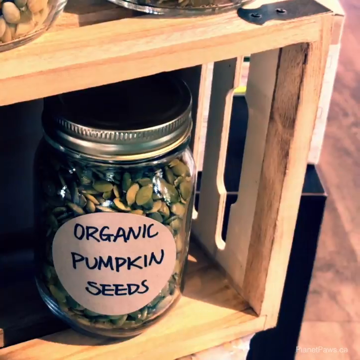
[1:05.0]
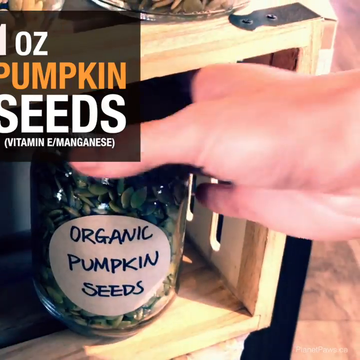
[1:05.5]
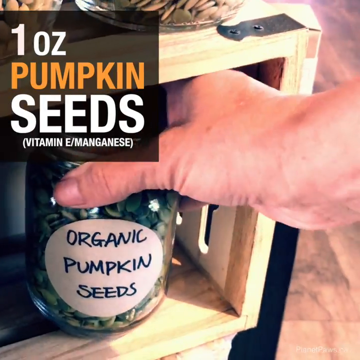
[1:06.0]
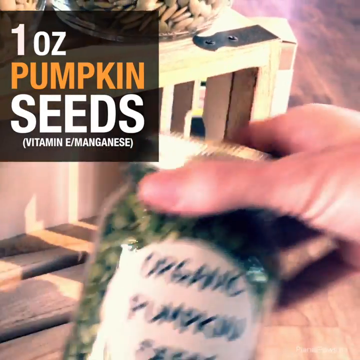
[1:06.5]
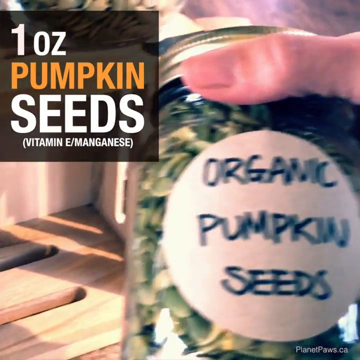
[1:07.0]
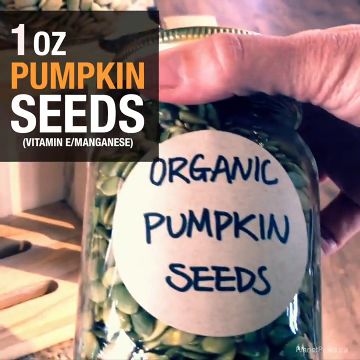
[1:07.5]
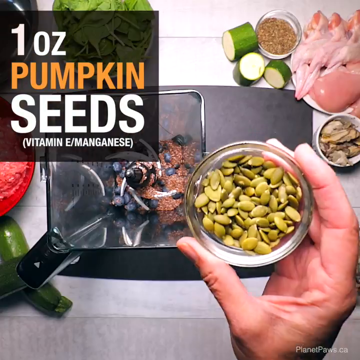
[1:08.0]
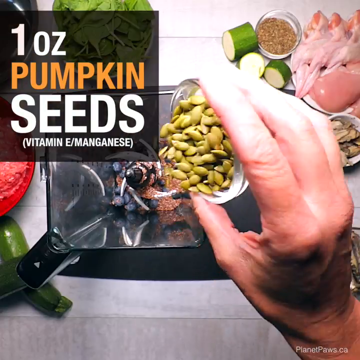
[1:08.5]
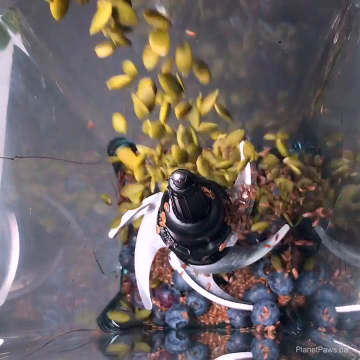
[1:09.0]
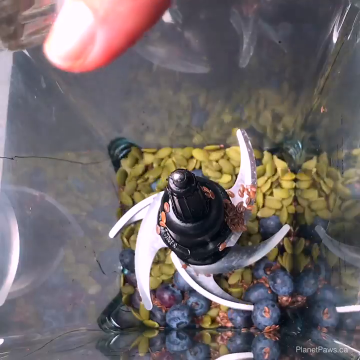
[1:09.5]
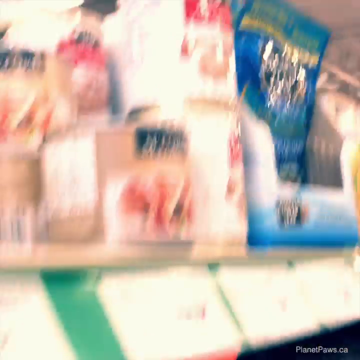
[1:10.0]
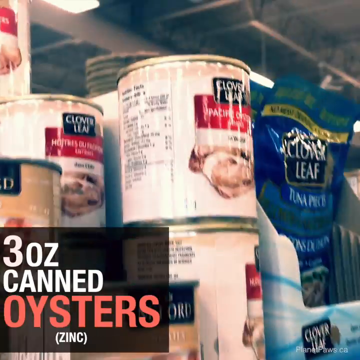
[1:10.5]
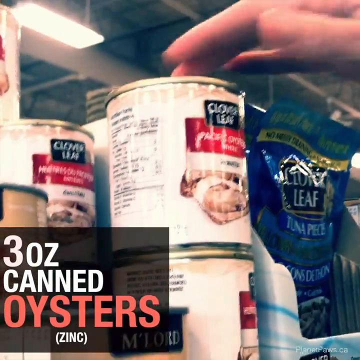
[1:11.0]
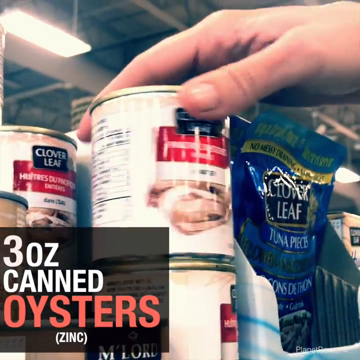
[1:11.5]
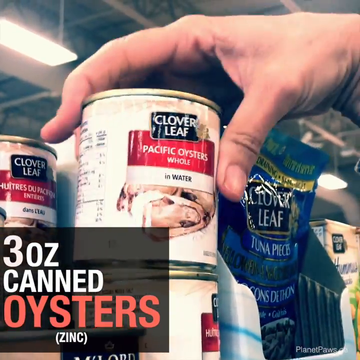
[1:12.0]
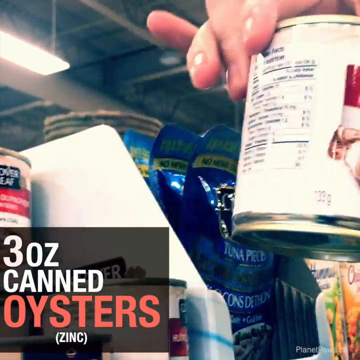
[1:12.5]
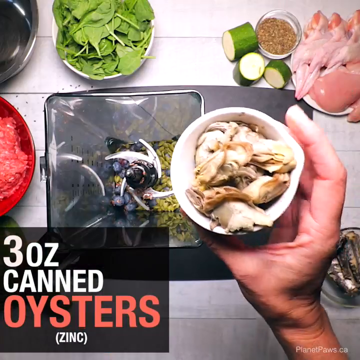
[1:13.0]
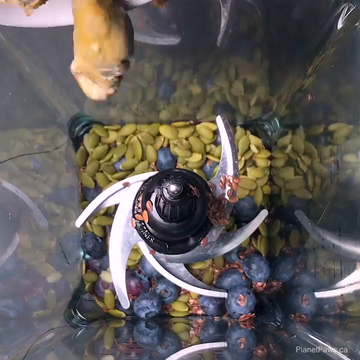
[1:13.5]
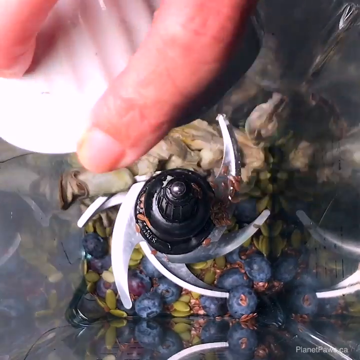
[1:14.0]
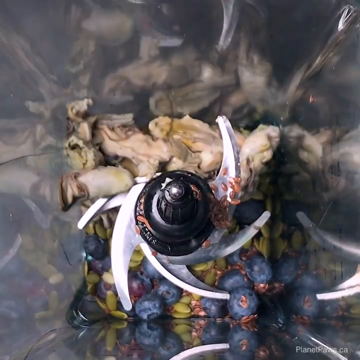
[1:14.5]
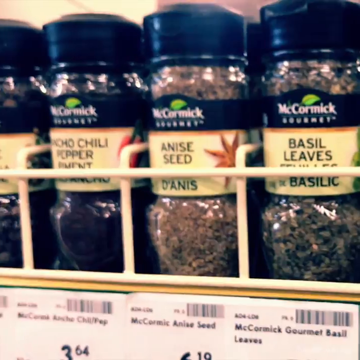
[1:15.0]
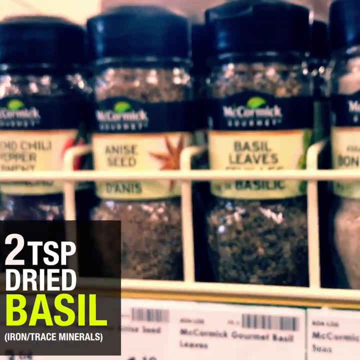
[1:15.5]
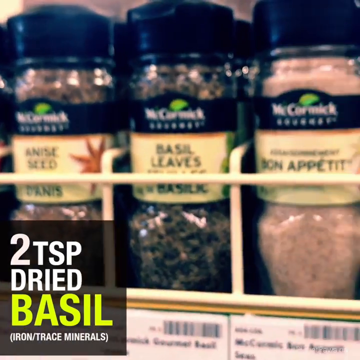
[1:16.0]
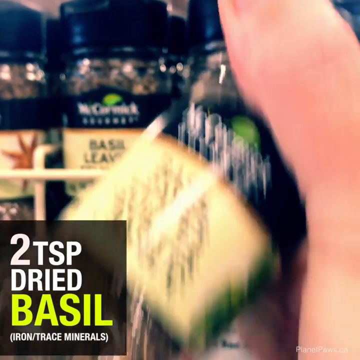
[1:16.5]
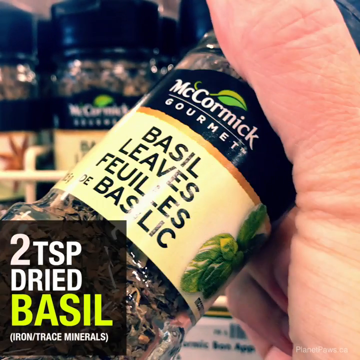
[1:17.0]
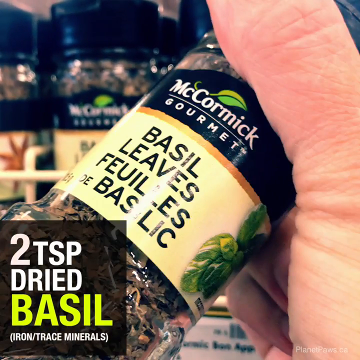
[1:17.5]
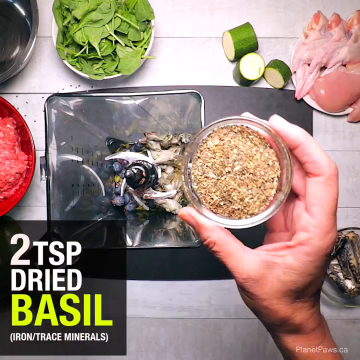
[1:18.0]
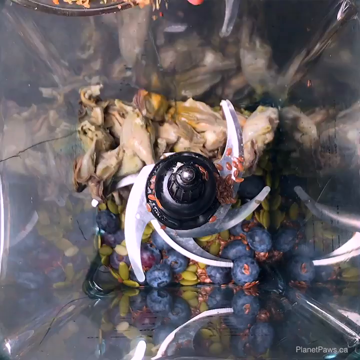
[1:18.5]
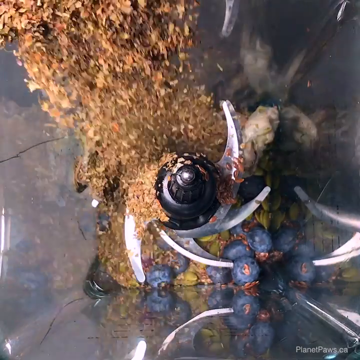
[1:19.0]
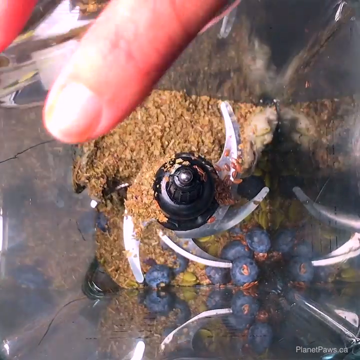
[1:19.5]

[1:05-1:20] Another part of the recipe shows a three-ounce can of oysters, two tablespoons of dried basil leaves and one ounce of pumpkin seeds. The man puts these into the blender along with the flaxseed and blueberries.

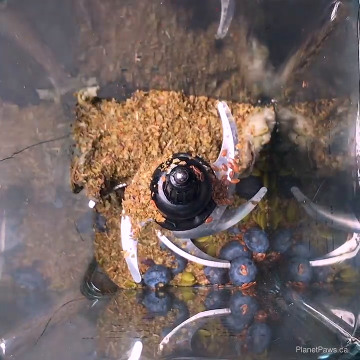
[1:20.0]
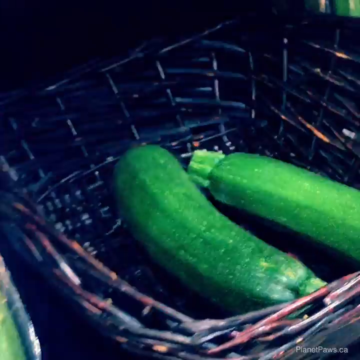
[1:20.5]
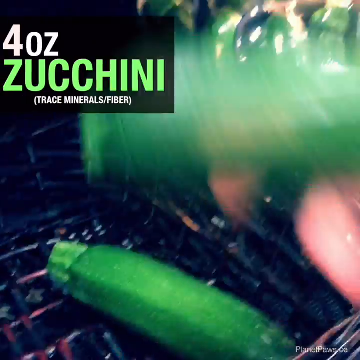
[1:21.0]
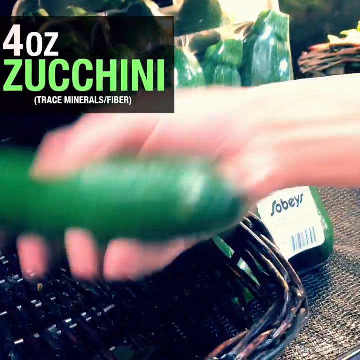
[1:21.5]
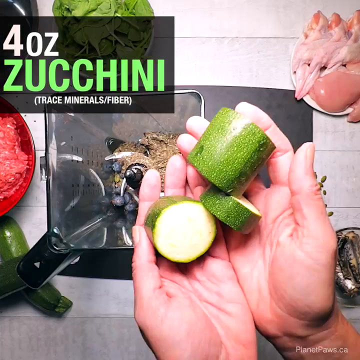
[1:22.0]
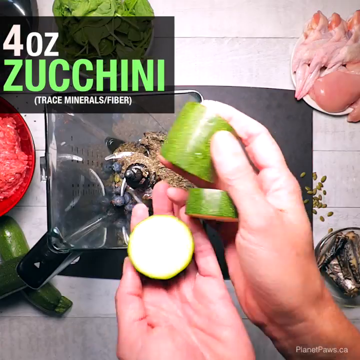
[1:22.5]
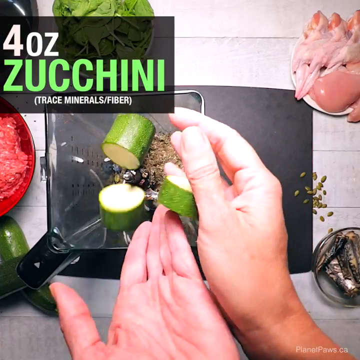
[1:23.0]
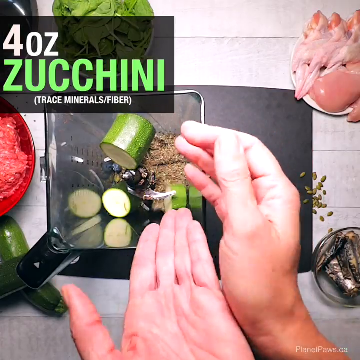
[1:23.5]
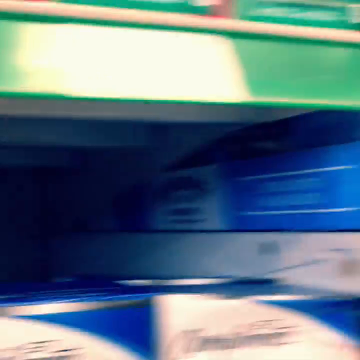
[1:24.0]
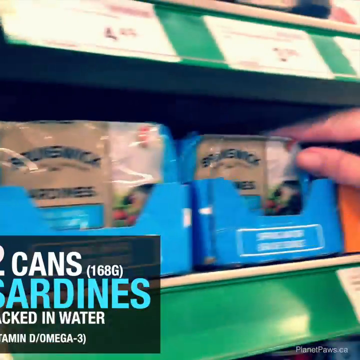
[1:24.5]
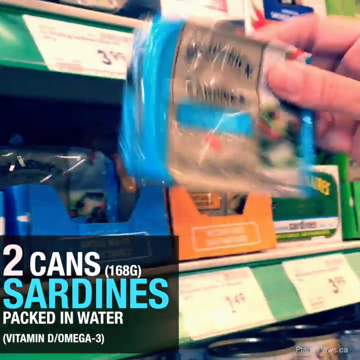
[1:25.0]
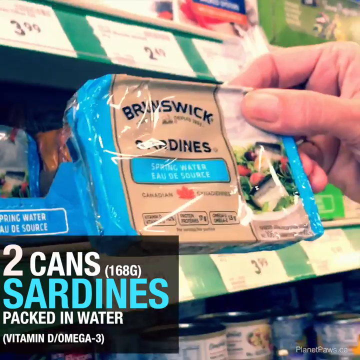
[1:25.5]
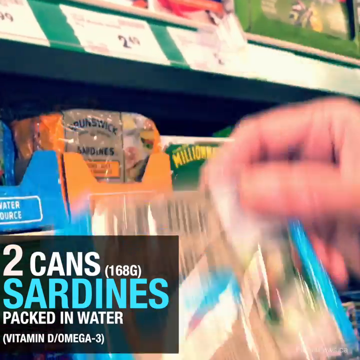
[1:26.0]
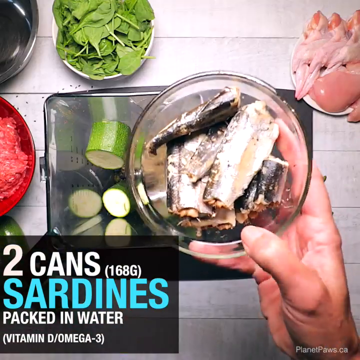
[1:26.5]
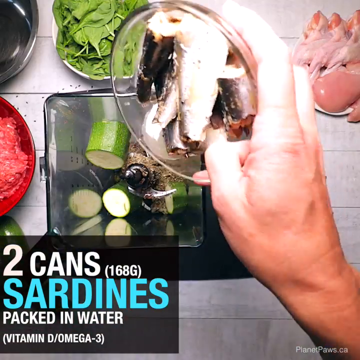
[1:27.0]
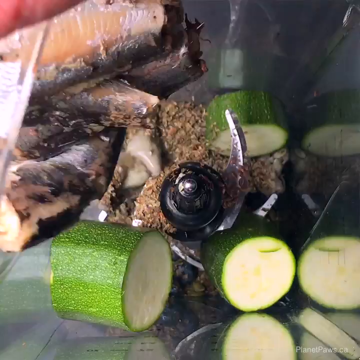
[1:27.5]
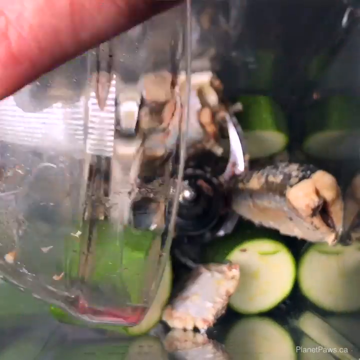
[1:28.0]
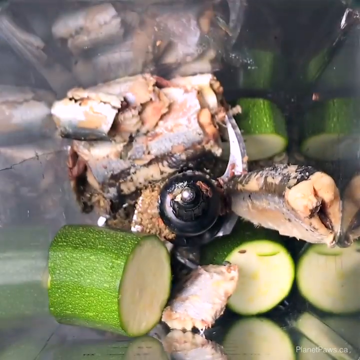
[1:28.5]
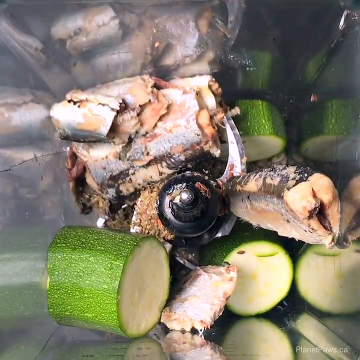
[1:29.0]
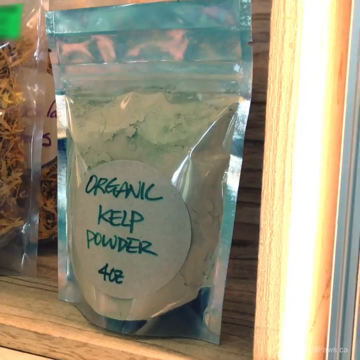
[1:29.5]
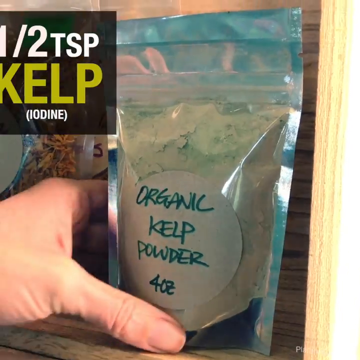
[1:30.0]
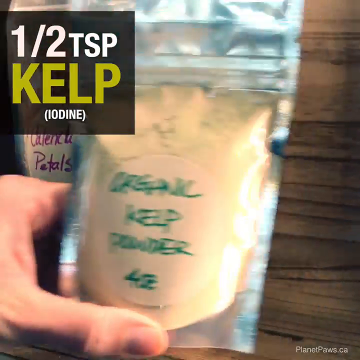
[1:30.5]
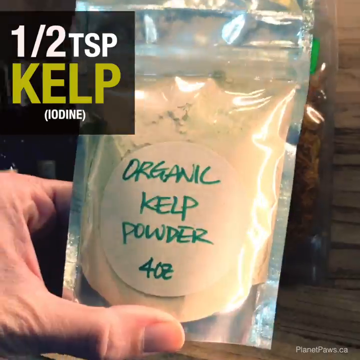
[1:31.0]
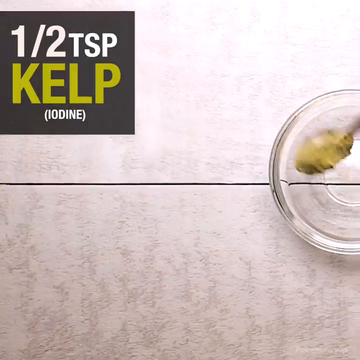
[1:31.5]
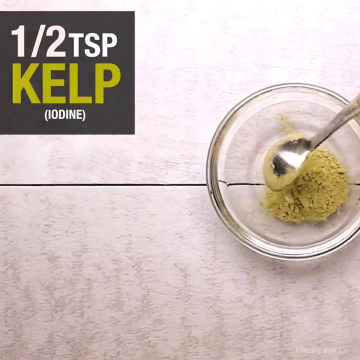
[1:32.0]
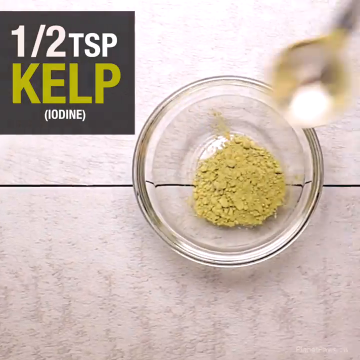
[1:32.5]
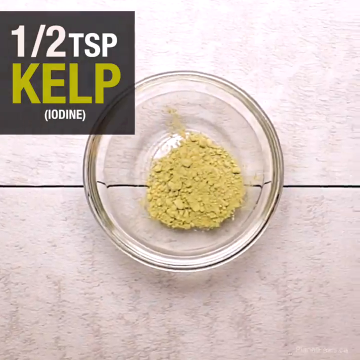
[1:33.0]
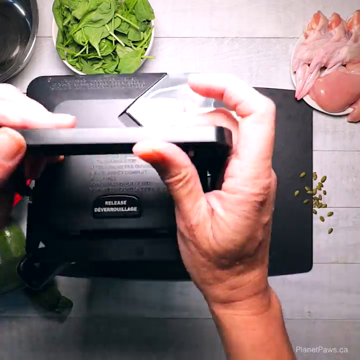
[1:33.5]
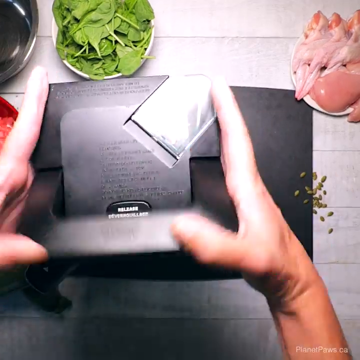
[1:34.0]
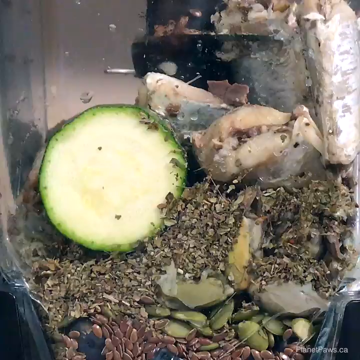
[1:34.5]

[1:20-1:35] Two cans of sardines packed in water, four ounces of chopped zucchini and half a tablespoon of organic kelp powder also go into the blender.